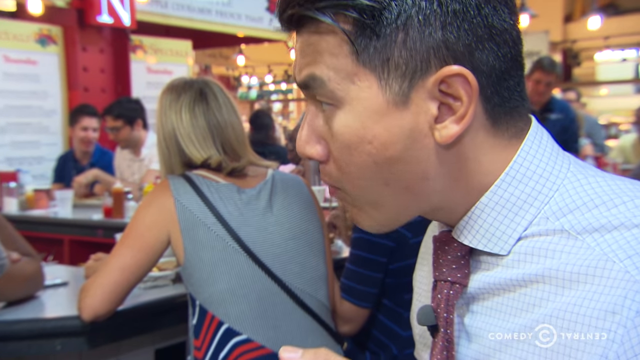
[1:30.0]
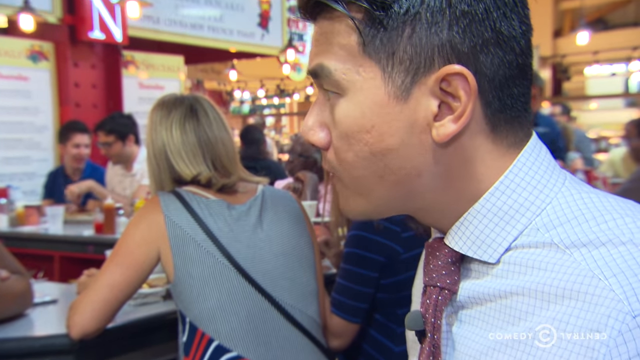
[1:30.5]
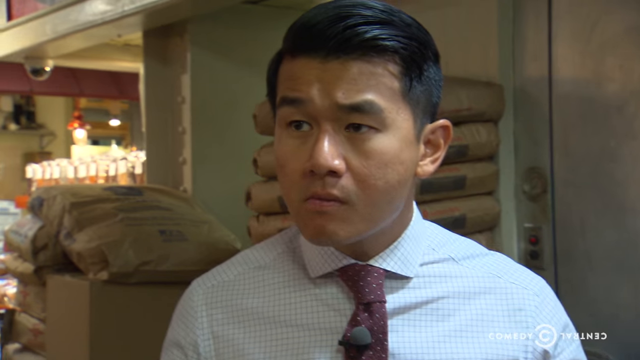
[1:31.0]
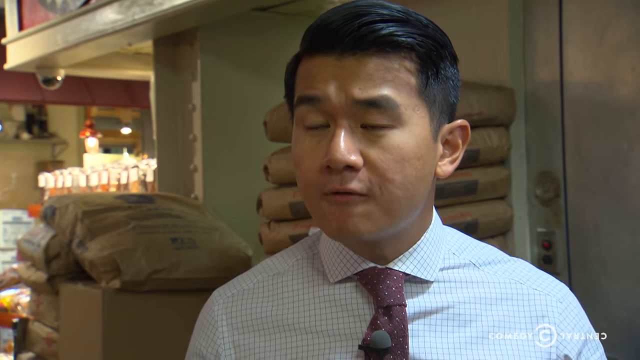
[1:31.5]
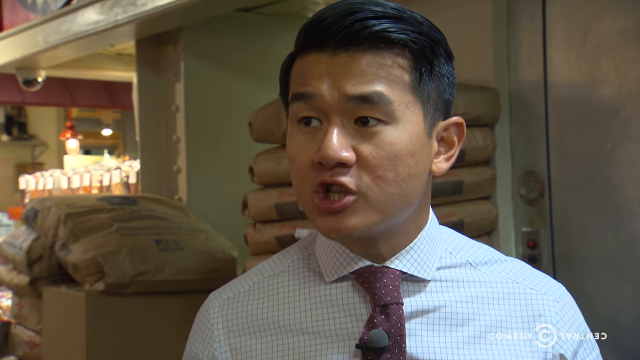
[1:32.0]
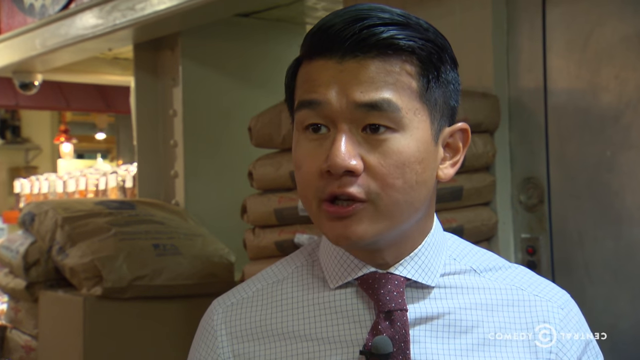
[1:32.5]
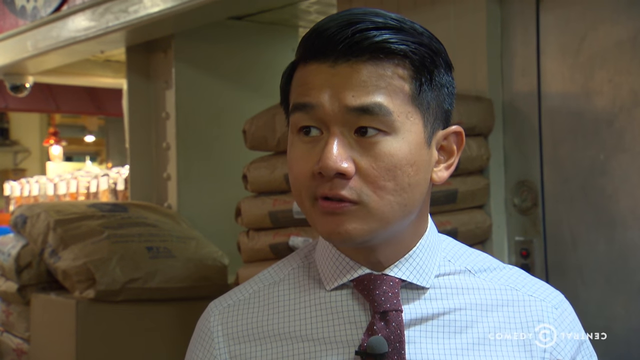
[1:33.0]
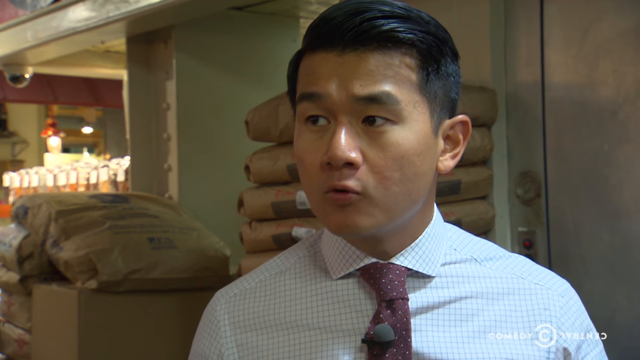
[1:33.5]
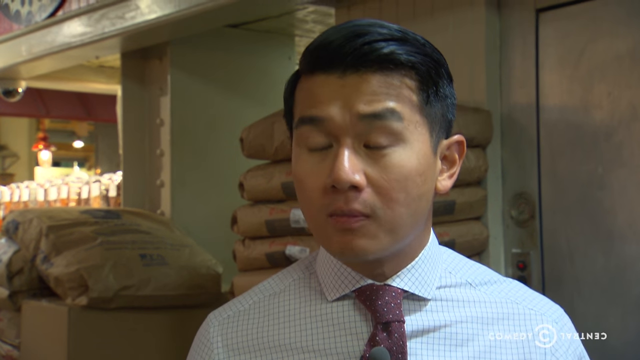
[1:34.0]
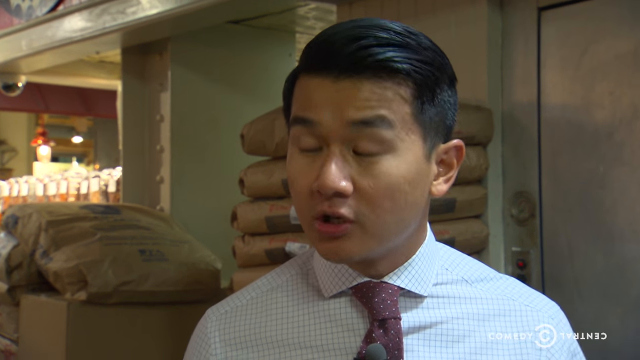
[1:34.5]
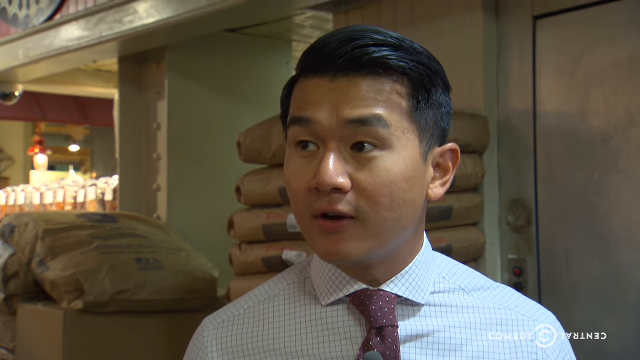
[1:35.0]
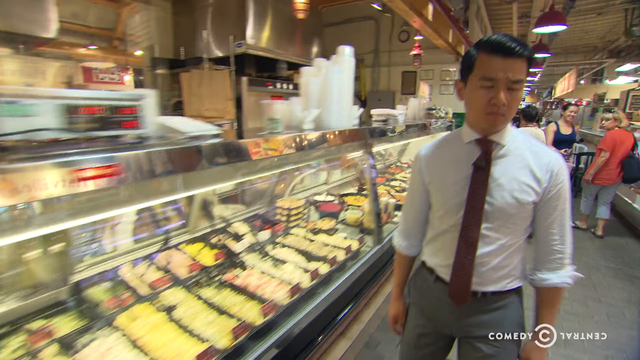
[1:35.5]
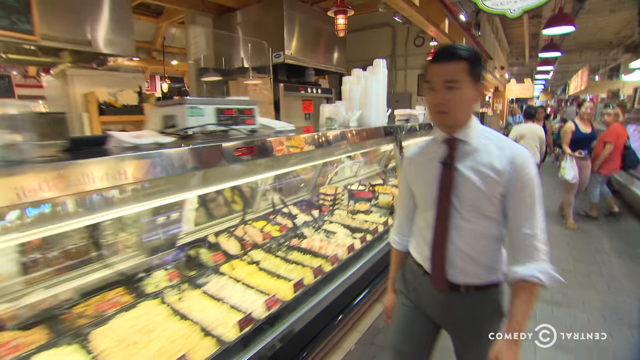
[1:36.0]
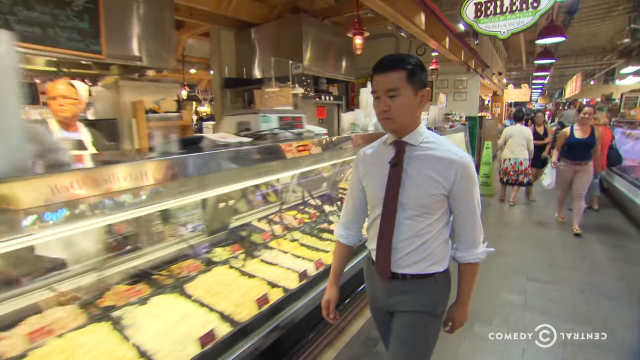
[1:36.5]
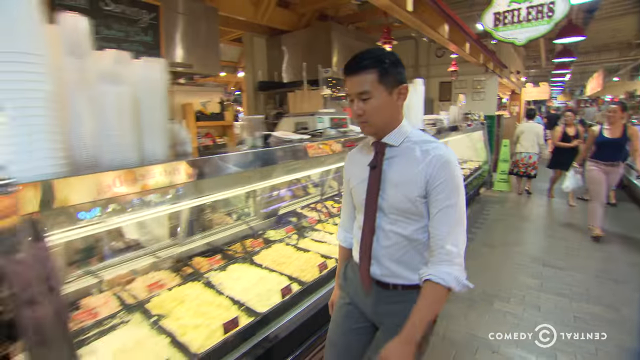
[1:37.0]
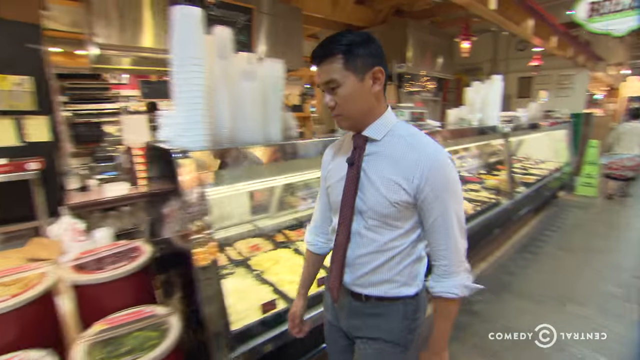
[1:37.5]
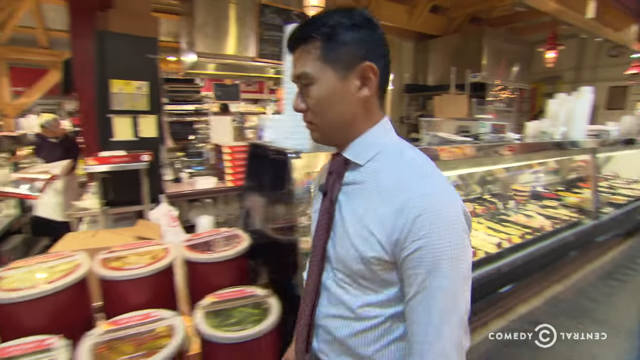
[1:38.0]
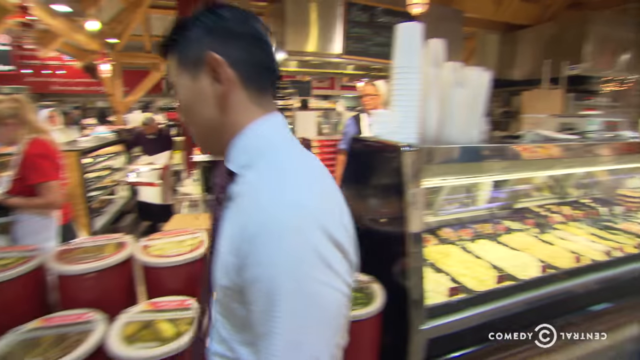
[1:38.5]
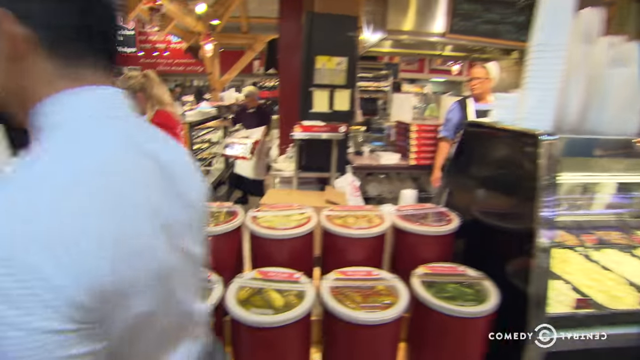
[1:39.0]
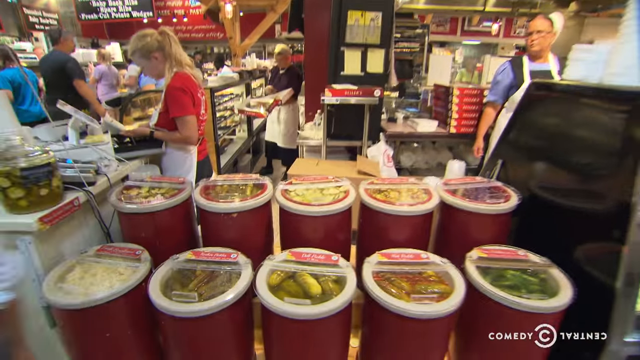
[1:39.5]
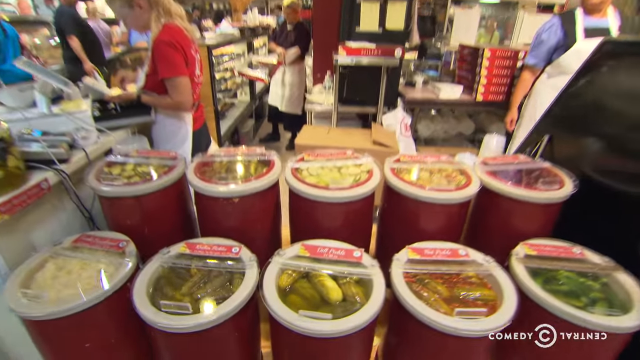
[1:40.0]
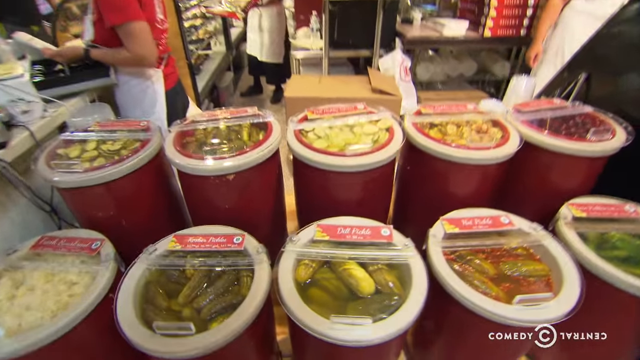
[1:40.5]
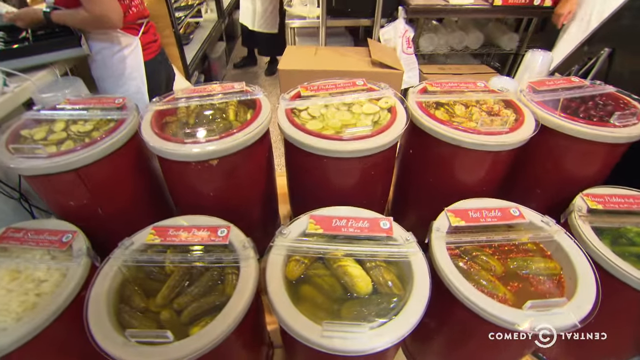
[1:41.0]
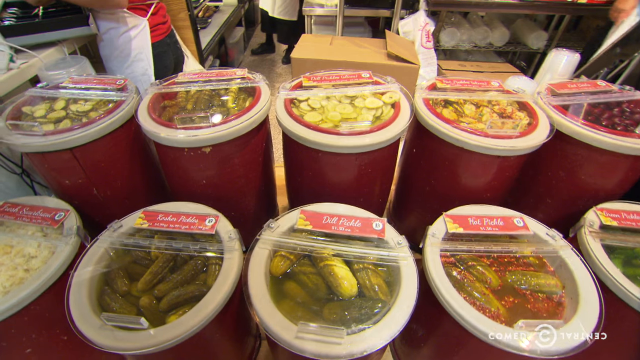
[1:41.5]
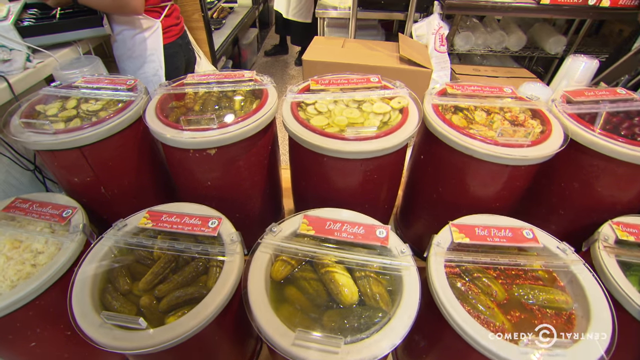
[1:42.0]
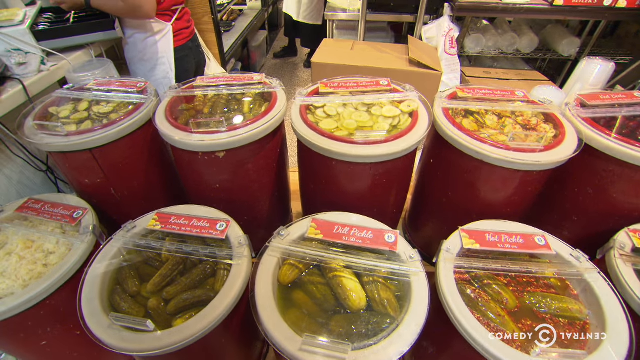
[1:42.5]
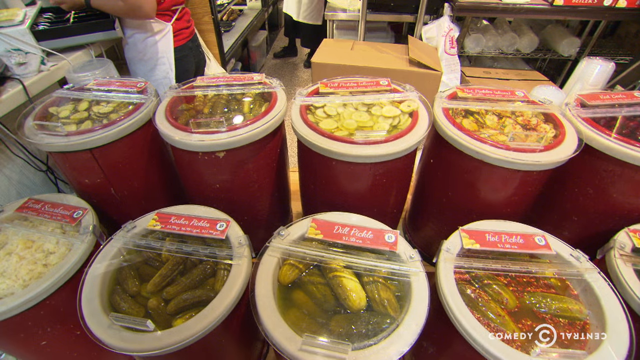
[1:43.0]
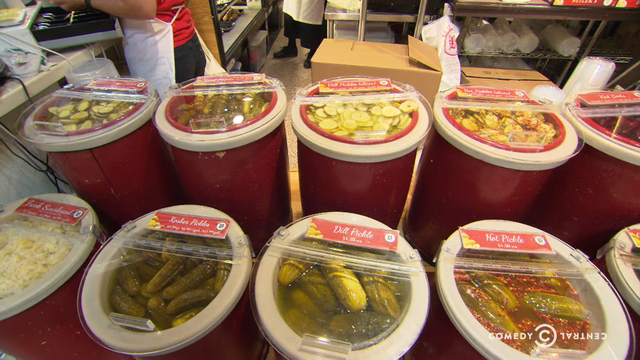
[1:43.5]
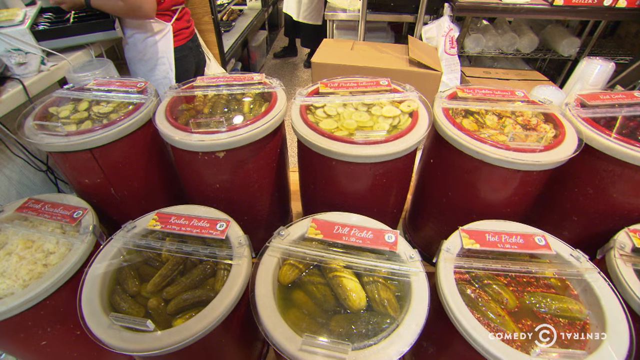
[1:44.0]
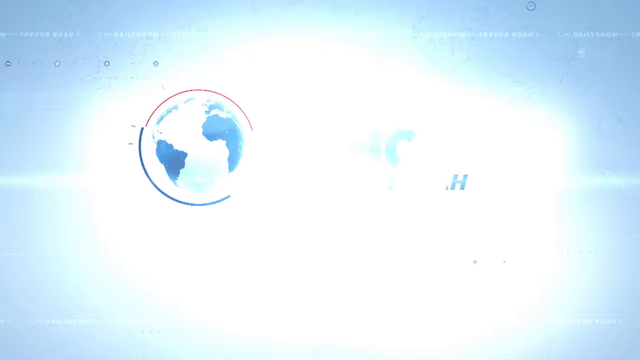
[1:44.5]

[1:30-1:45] An Asian man in his late 20s to mid 30s, wearing a white shirt with a tie and gray slacks, chews some type of food, and the look on his face suggests he finds it pleasurable. The scene cuts to him walking past a deli counter with a variety of foodstuffs in the case, then walking by ten barrels, each holding an assortment of pickles. He appears to be in some type of market bustling with activity, and most of the people in the background are obese. Employees wearing aprons are behind the counter with the pickles and meat, and a bakery area is visible behind that counter. Everyone shown is obese except the reporter and one of the employees. The logo for The Daily Show appears very briefly.